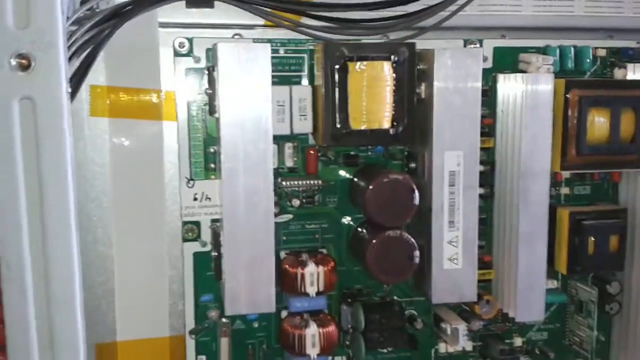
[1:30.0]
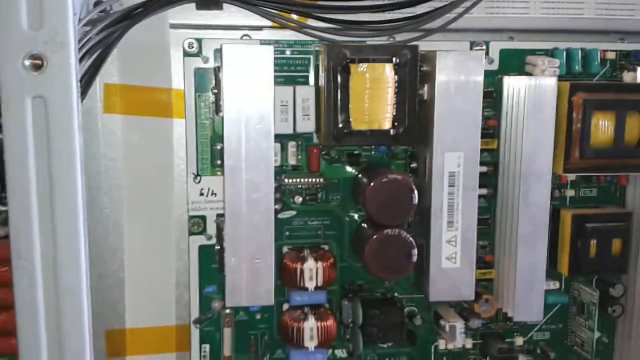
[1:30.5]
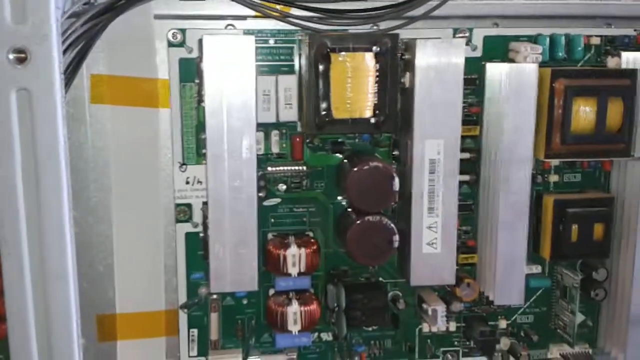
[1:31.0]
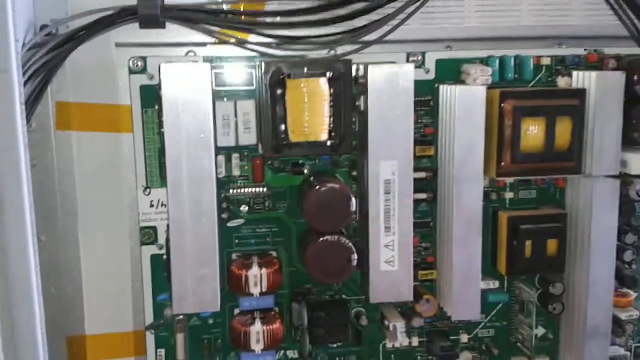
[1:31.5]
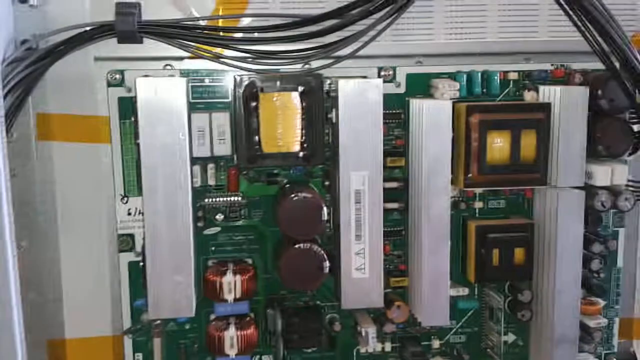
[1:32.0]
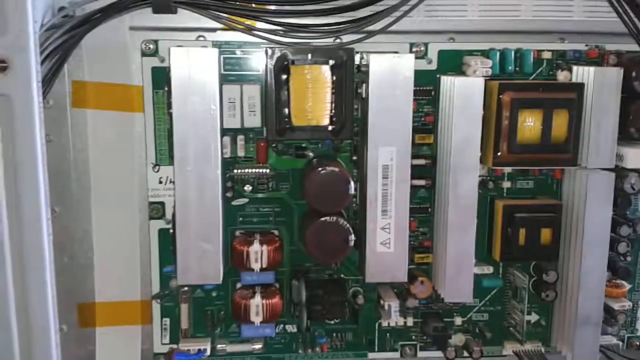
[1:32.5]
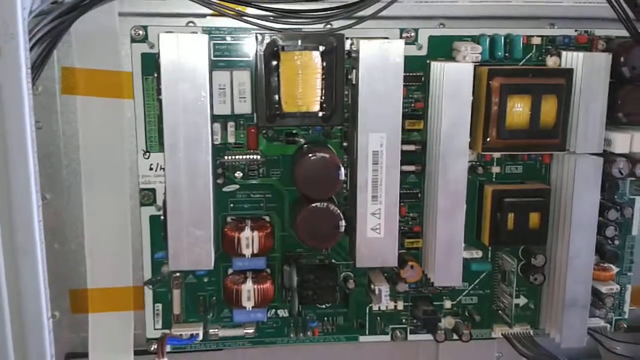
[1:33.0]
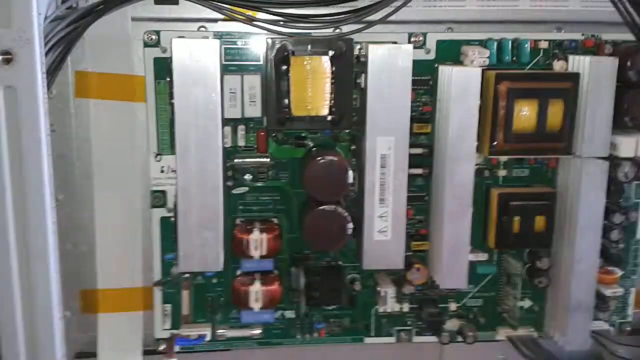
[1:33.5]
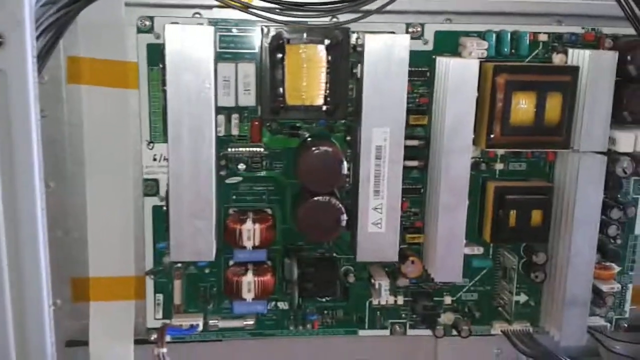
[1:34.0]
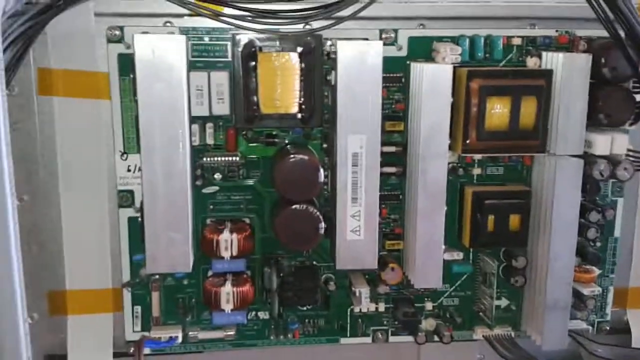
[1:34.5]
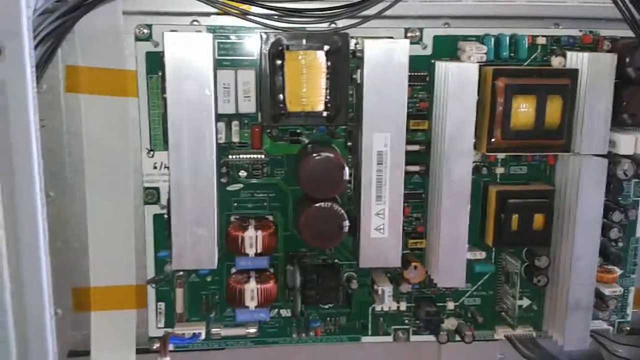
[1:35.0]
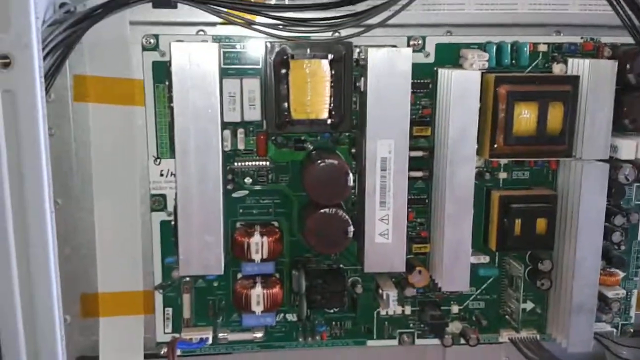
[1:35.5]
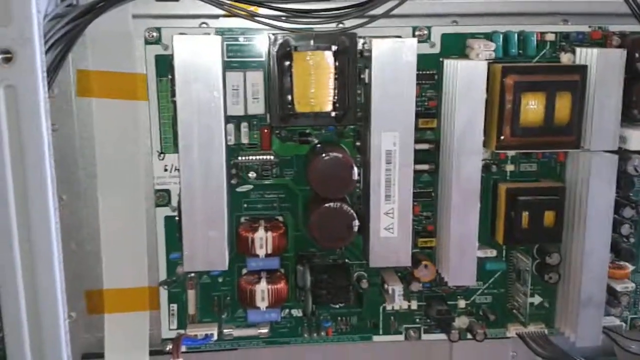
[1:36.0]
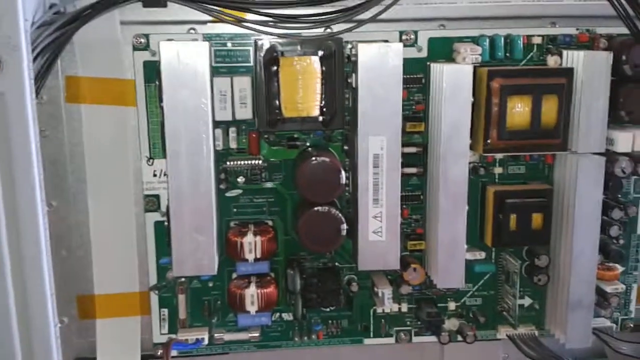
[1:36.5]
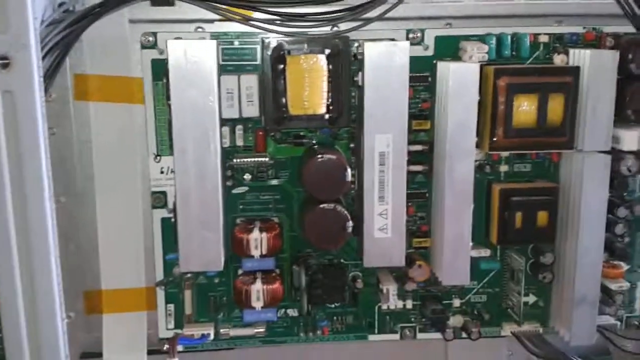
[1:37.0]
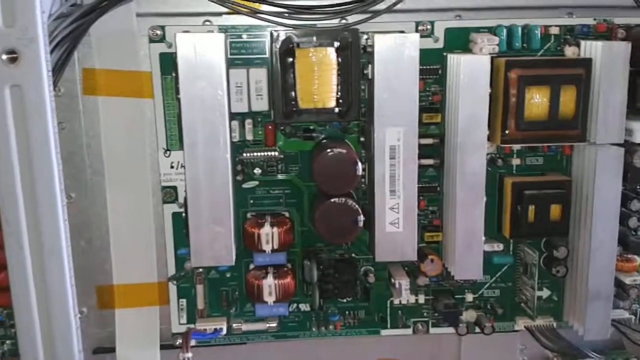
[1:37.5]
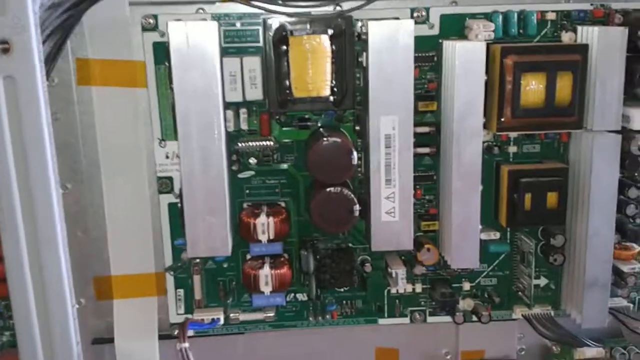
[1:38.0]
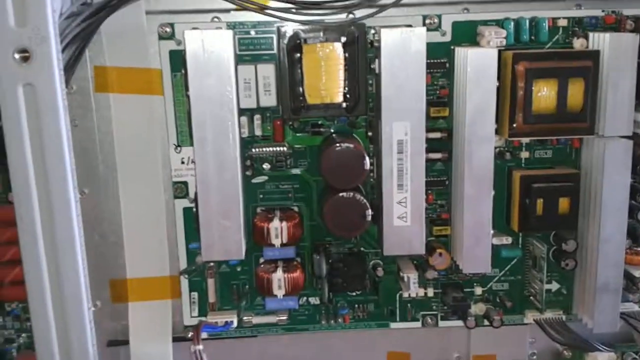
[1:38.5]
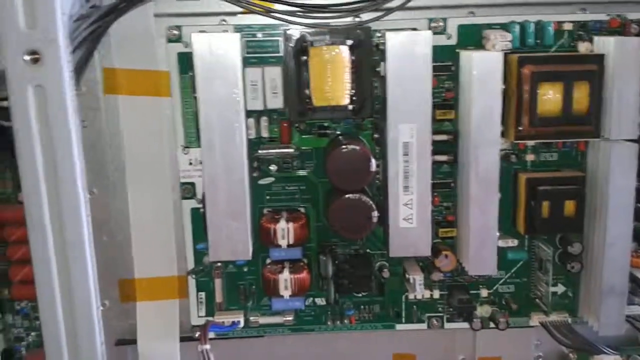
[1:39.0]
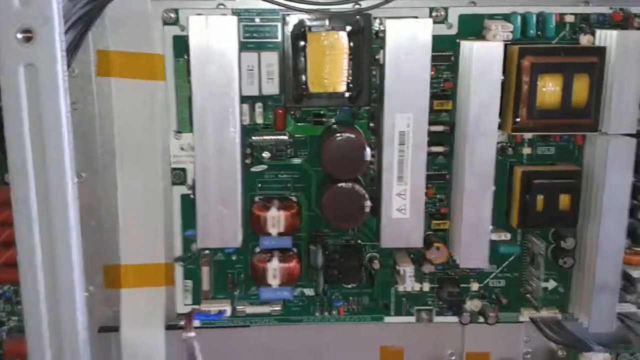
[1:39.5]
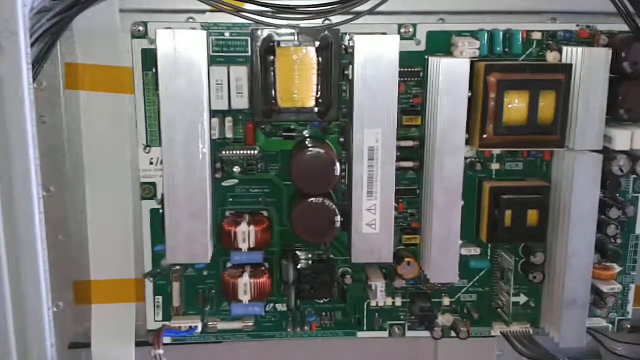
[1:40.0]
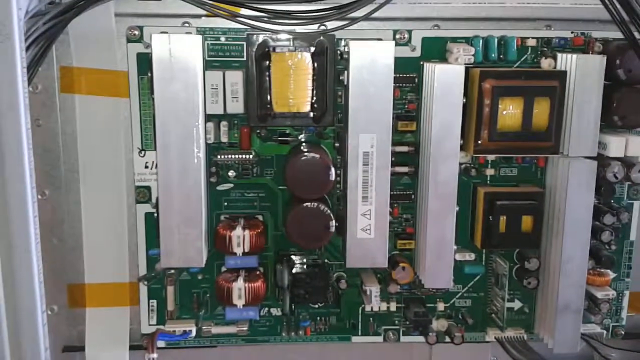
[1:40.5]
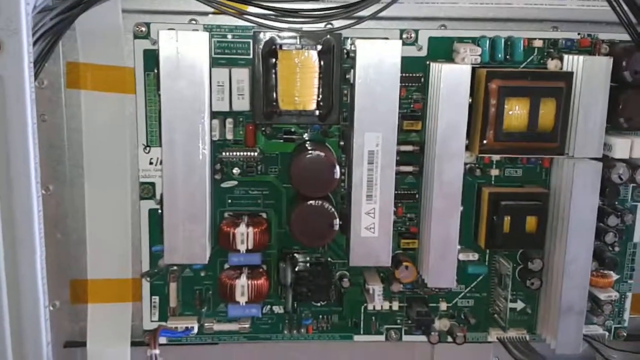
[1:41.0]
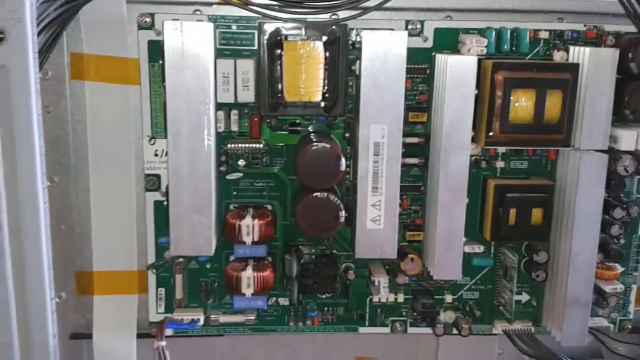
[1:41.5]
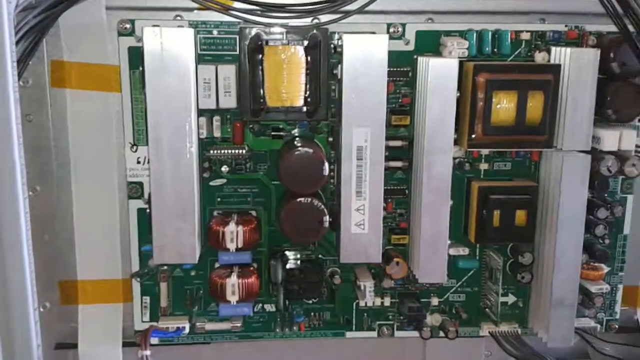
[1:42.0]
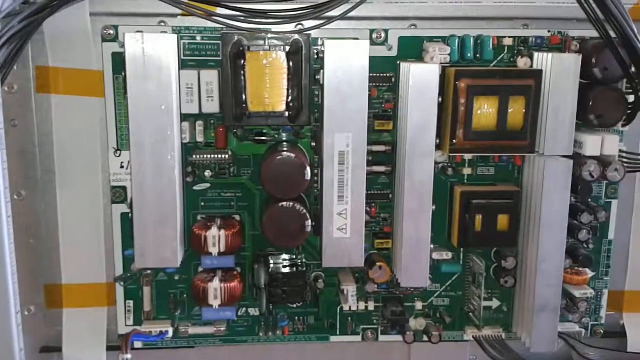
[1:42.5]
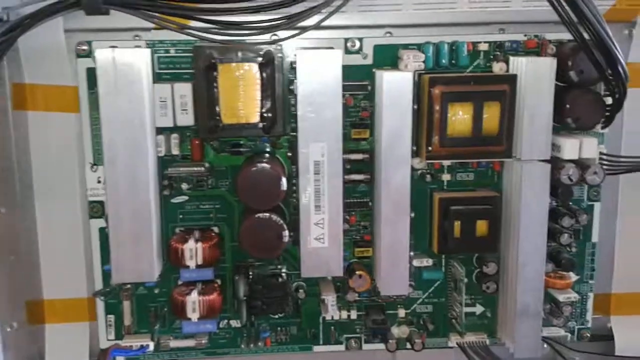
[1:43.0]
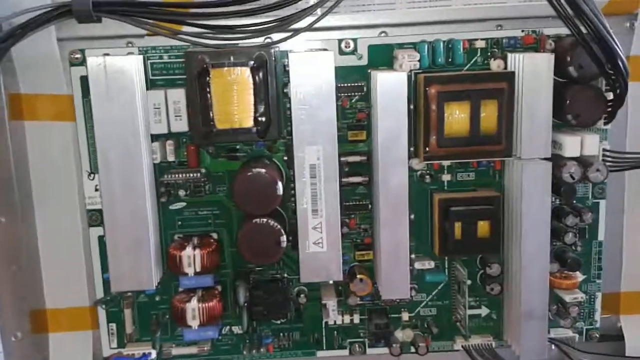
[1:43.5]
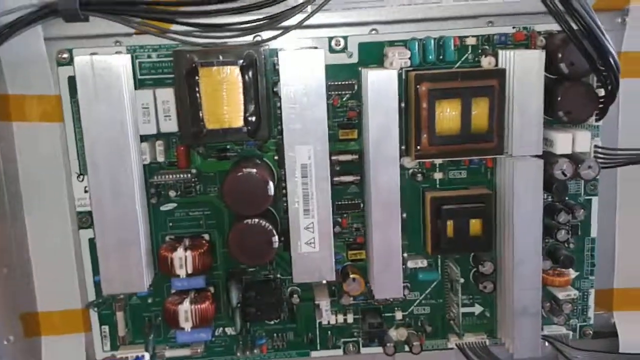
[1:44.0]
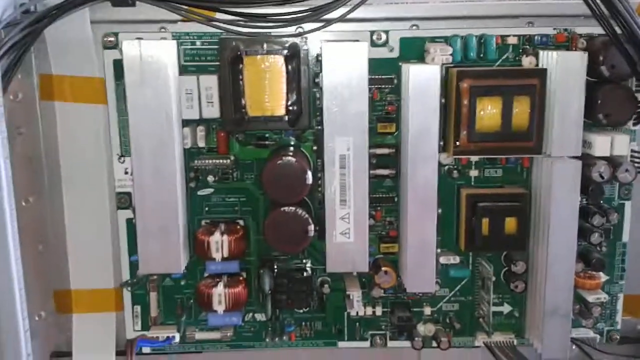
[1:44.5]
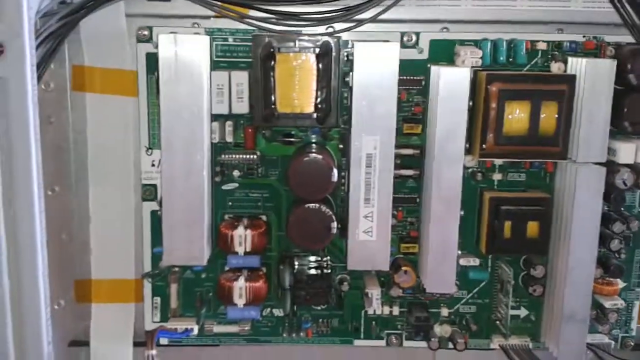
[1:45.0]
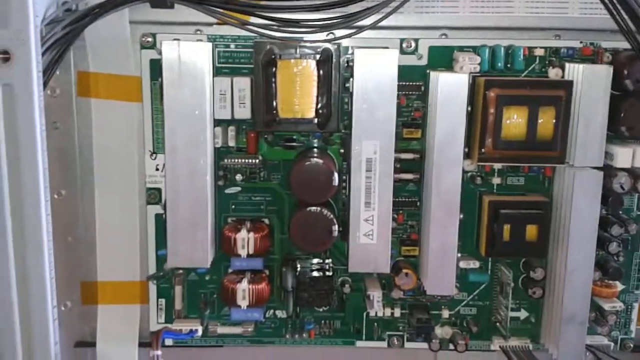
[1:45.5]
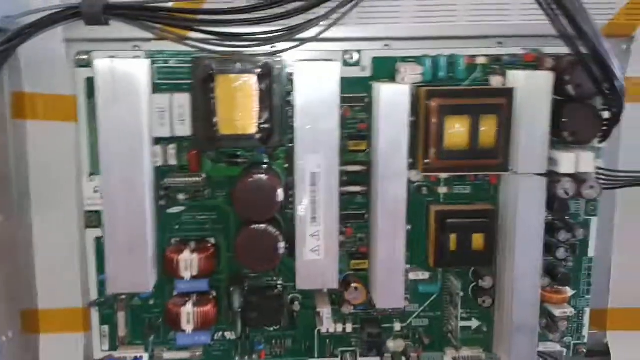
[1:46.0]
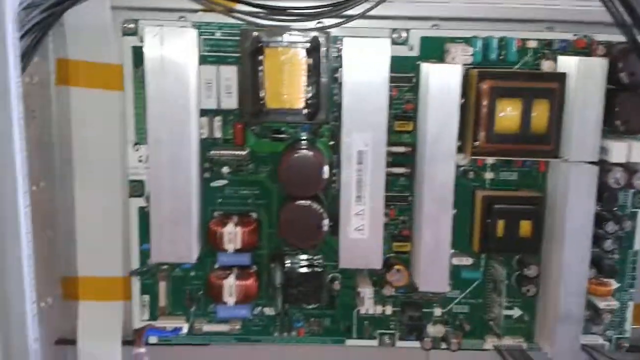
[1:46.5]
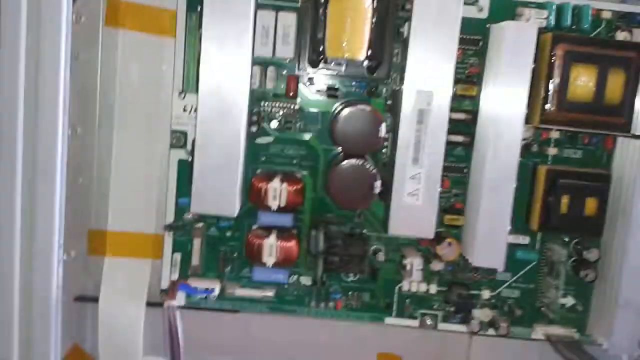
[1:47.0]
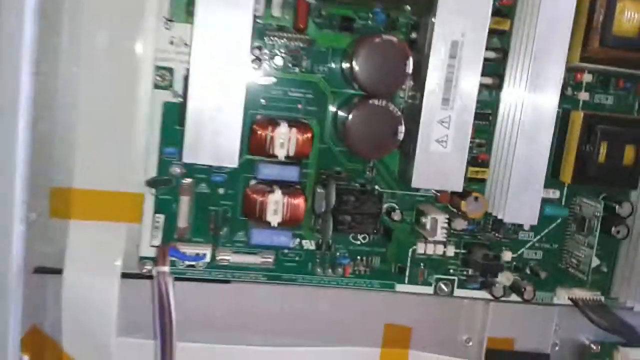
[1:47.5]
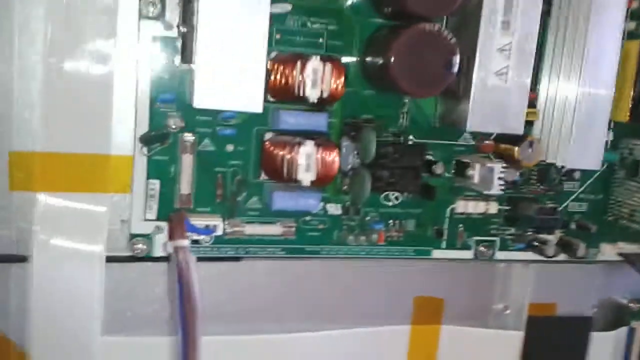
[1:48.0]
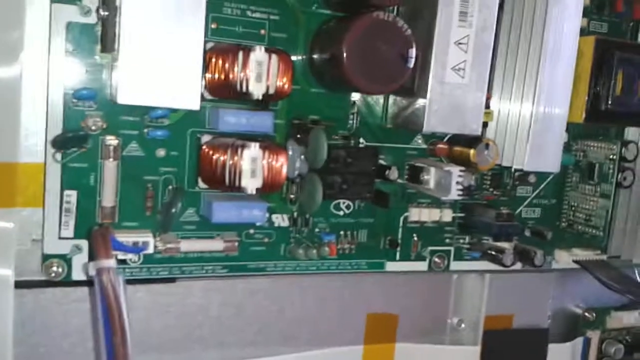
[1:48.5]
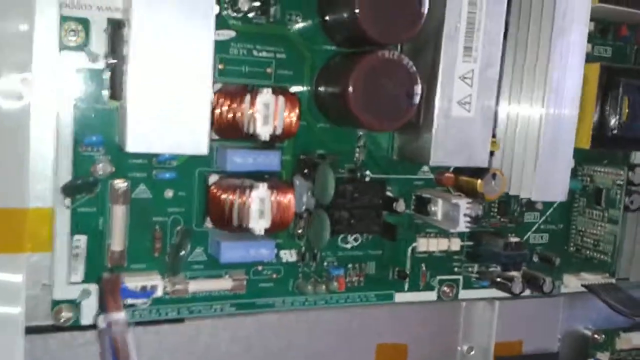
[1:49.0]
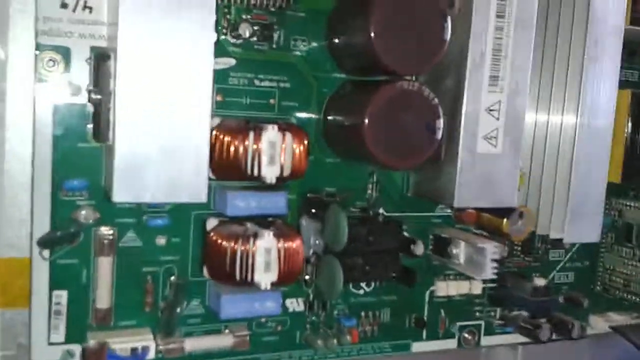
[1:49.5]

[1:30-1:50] The inside of a large flat screen TV is shown with the back case off, exposing the circuitry and circuit boards. He gets a close-up of a dark green circuit board with resistors and capacitors of different colors and small diodes plugged into it, along with different colored transistors, an integrated circuit and two relay switches. Two large round white inductors each have copper wire wrapped around the whole inductor. In the top right corner of the circuit board, black wiring is plugged in; above the board the wiring is clipped so it doesn't get on the circuit board, and it runs over to the left side to another circuit board on the left side.